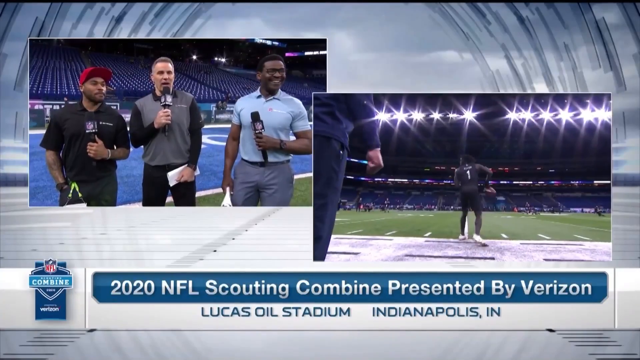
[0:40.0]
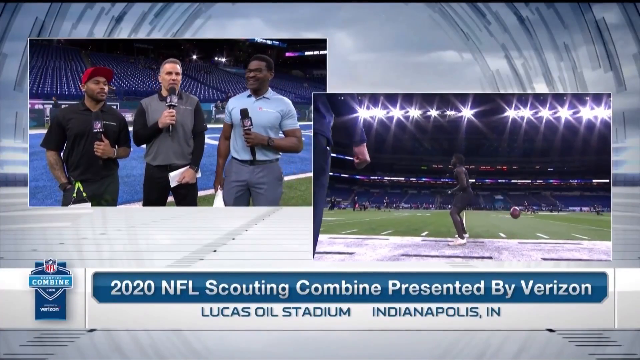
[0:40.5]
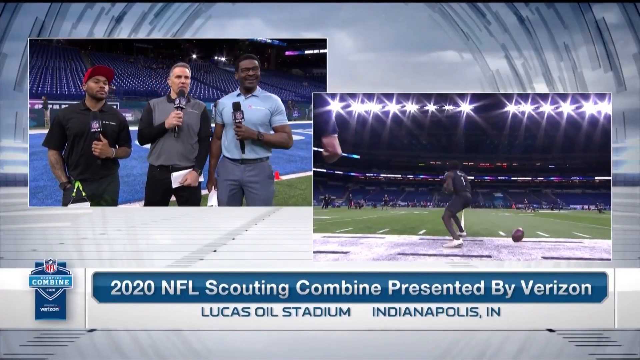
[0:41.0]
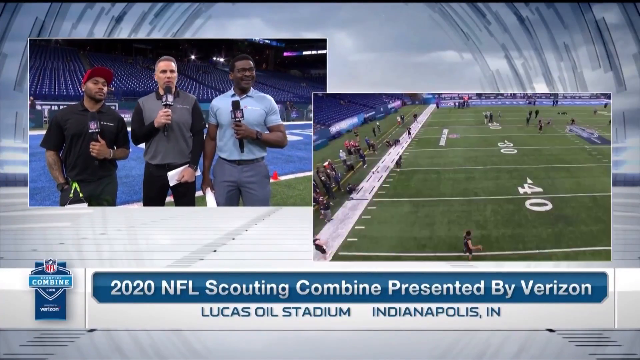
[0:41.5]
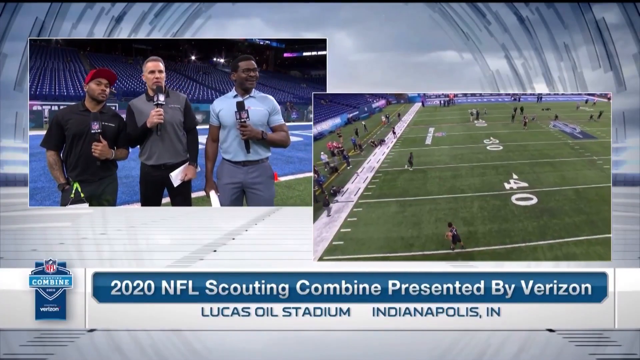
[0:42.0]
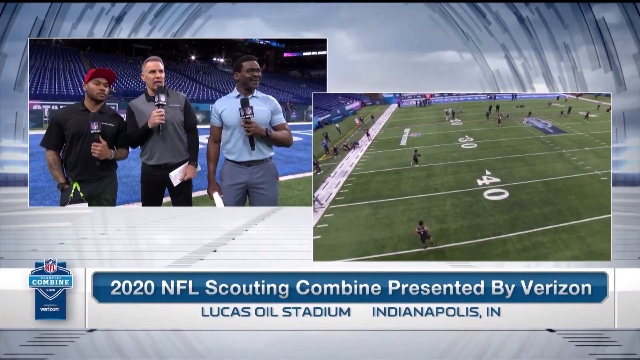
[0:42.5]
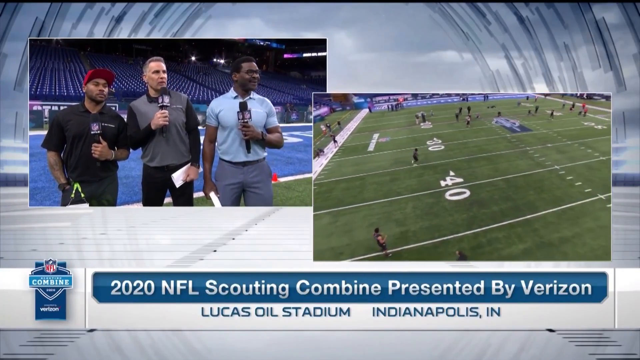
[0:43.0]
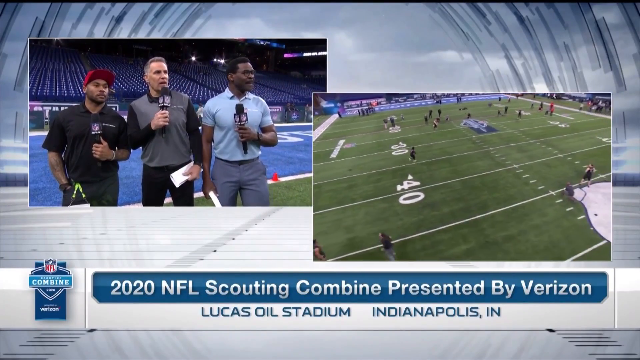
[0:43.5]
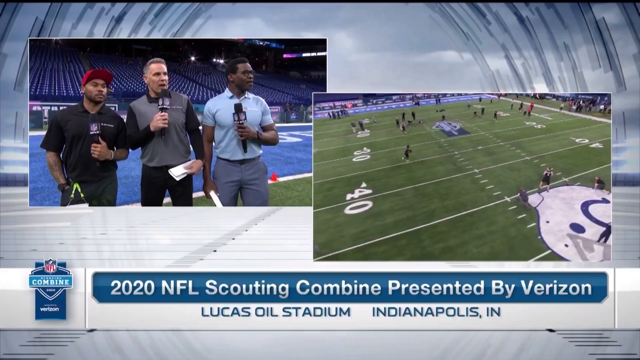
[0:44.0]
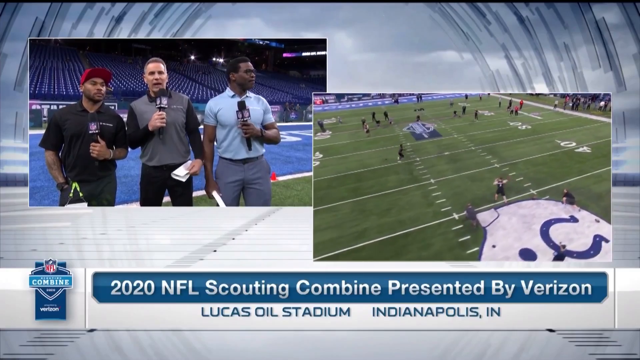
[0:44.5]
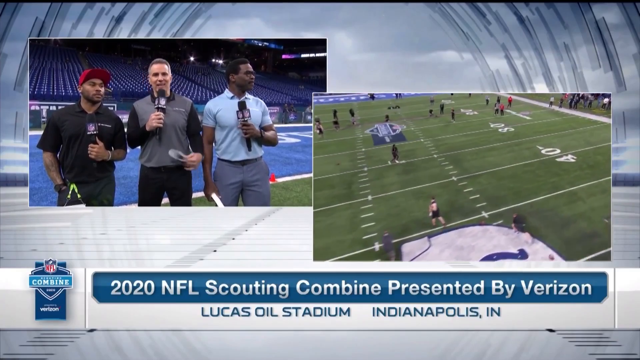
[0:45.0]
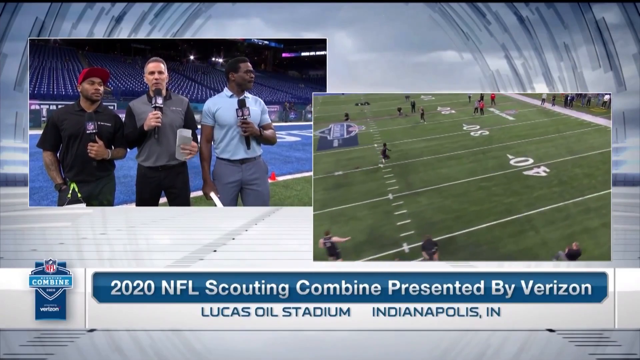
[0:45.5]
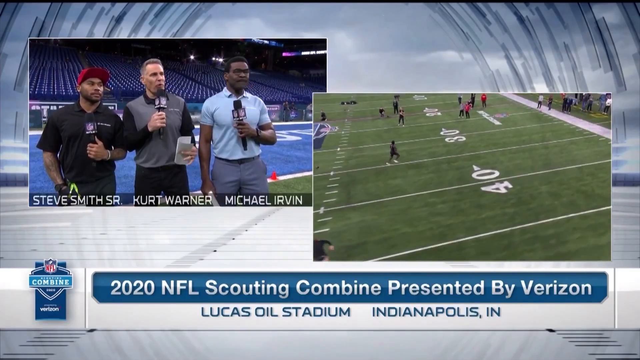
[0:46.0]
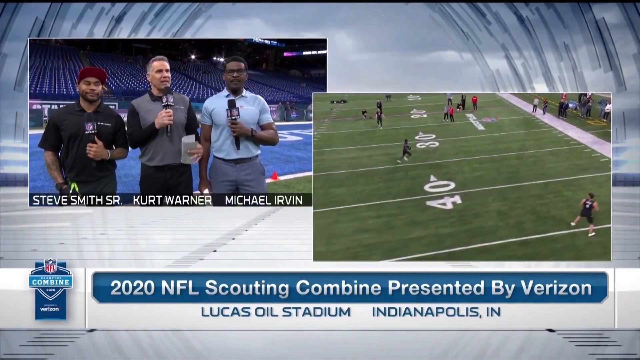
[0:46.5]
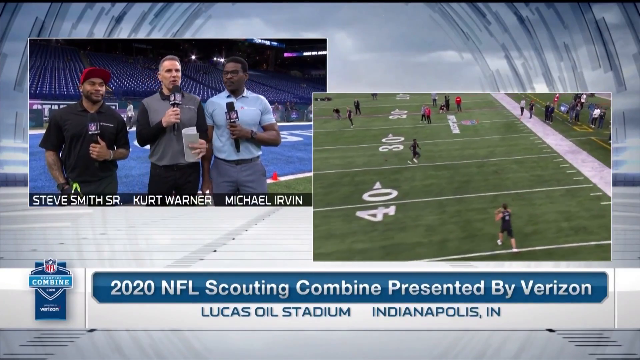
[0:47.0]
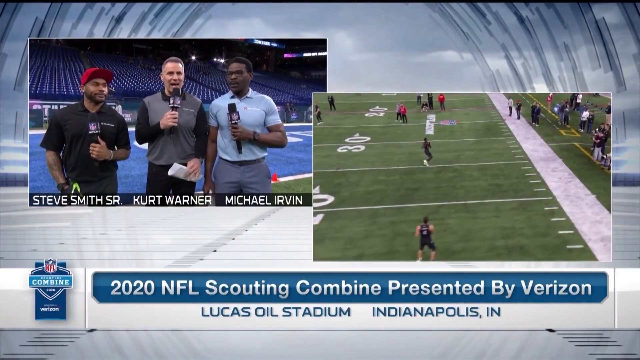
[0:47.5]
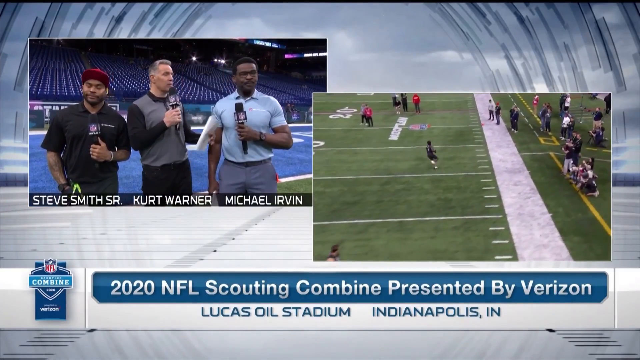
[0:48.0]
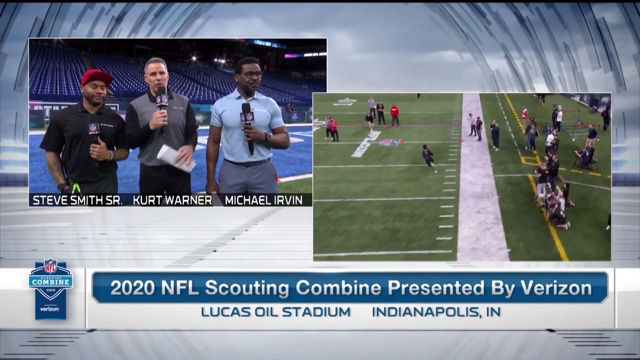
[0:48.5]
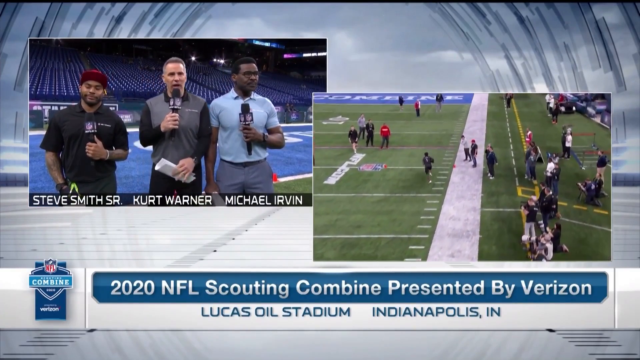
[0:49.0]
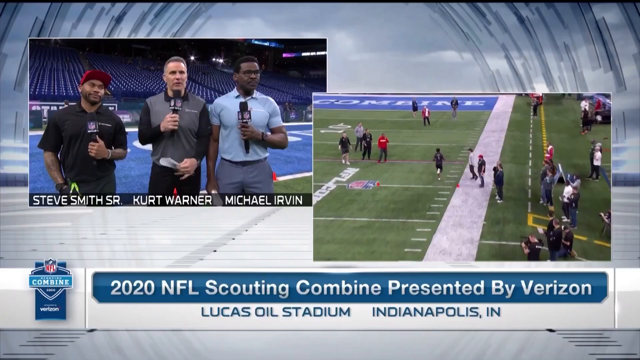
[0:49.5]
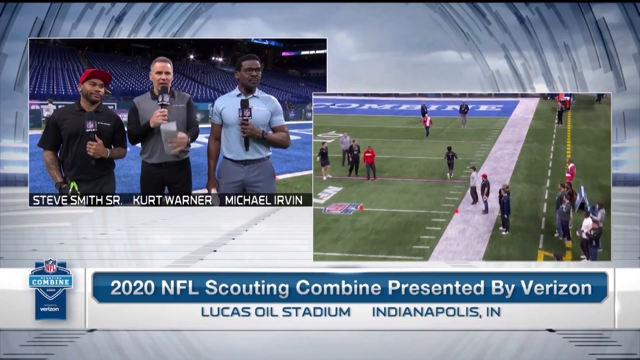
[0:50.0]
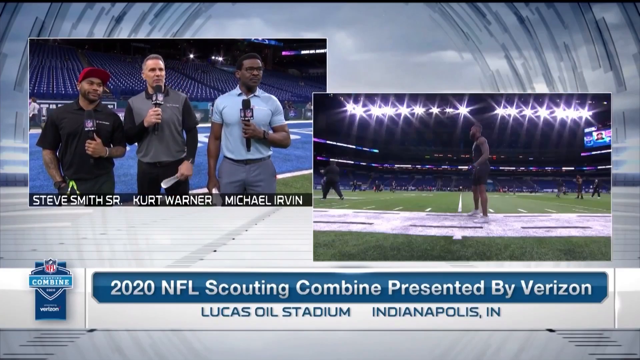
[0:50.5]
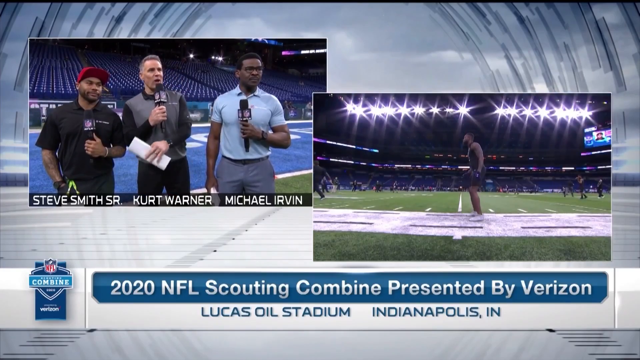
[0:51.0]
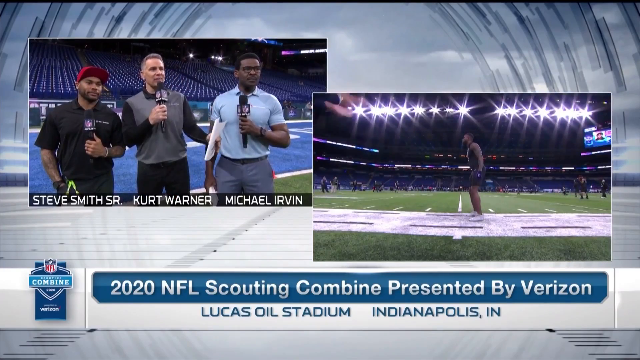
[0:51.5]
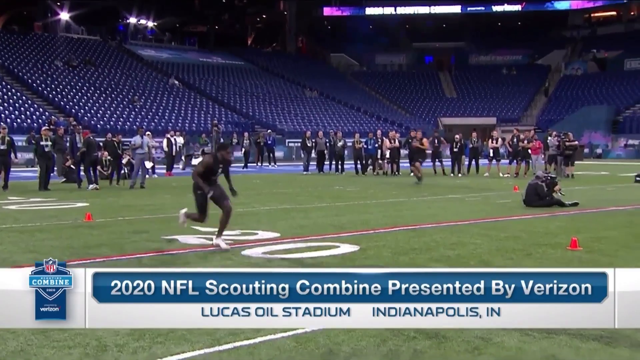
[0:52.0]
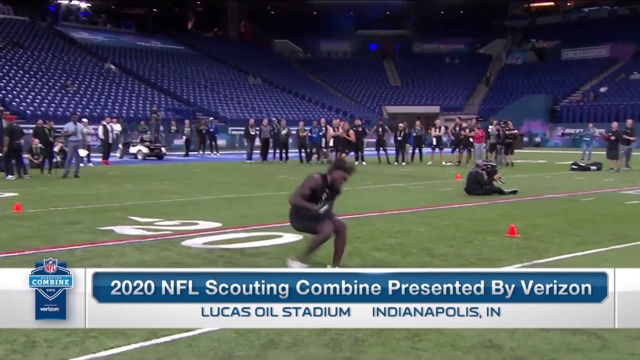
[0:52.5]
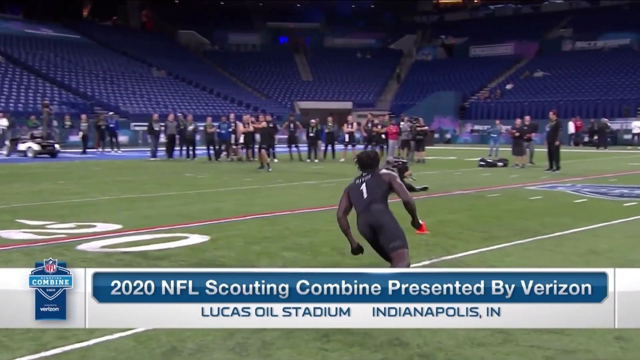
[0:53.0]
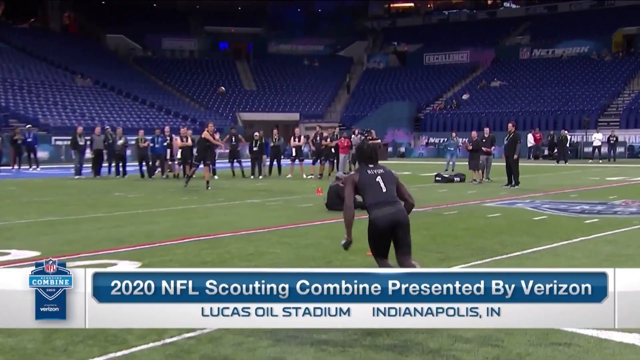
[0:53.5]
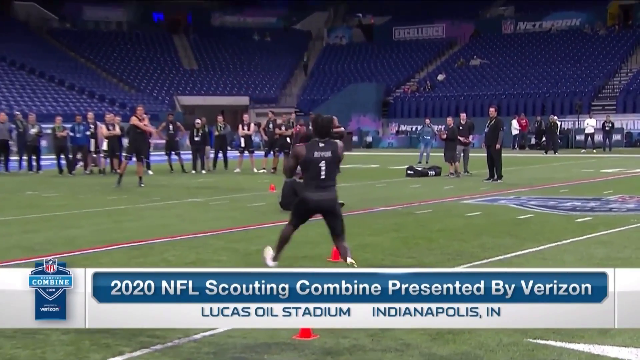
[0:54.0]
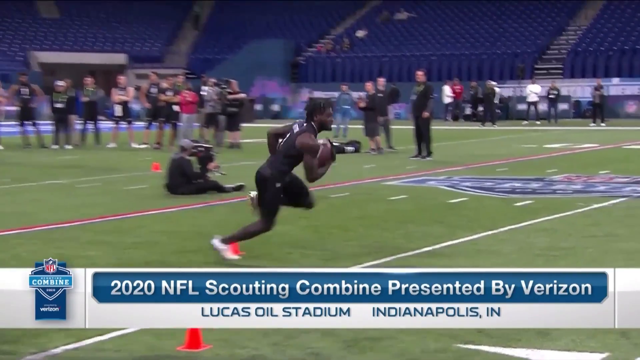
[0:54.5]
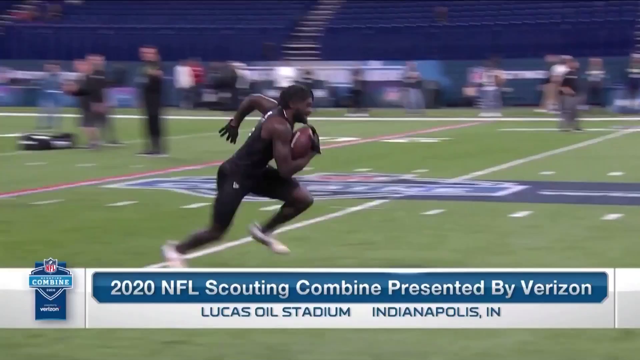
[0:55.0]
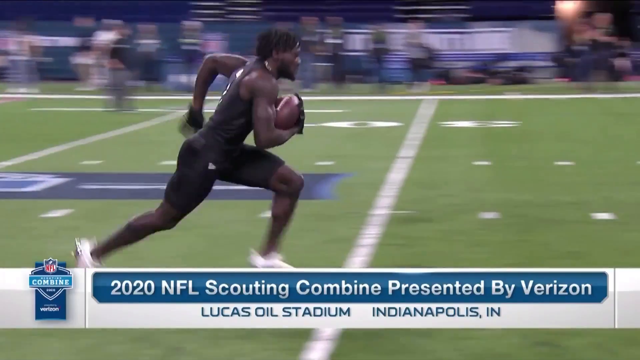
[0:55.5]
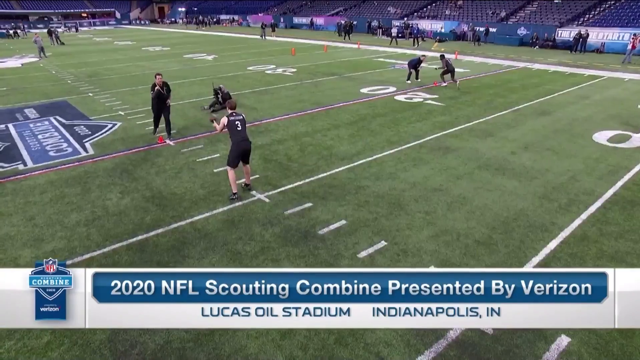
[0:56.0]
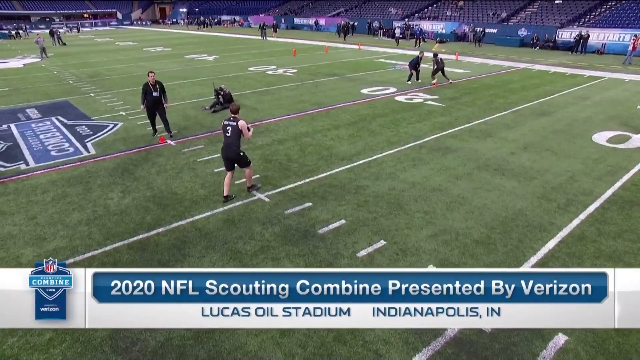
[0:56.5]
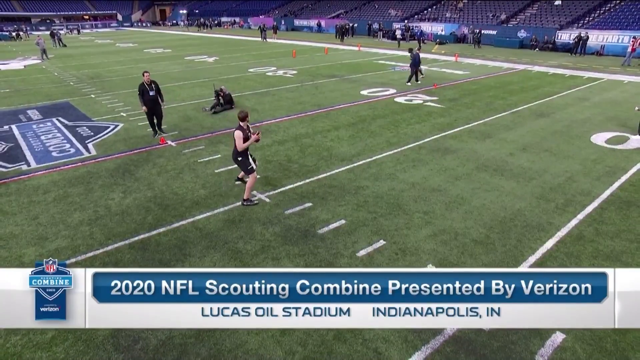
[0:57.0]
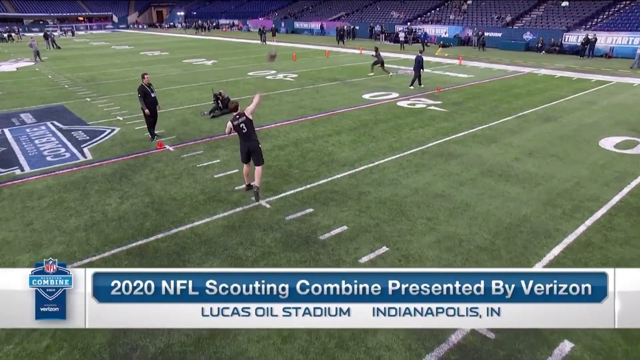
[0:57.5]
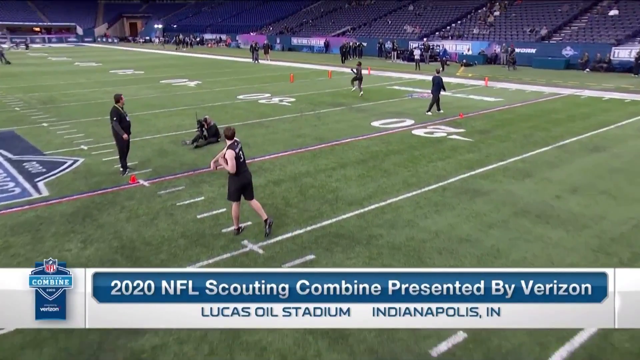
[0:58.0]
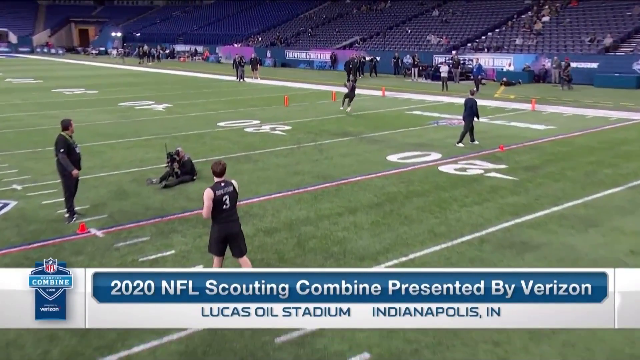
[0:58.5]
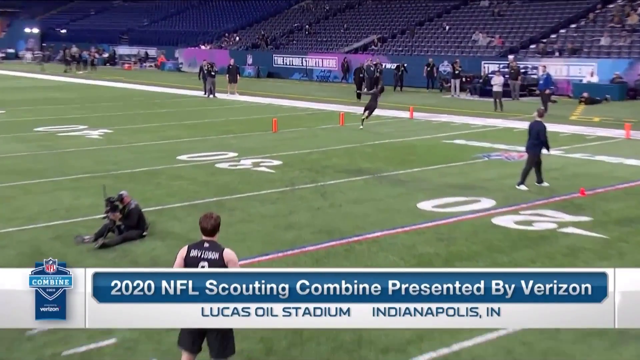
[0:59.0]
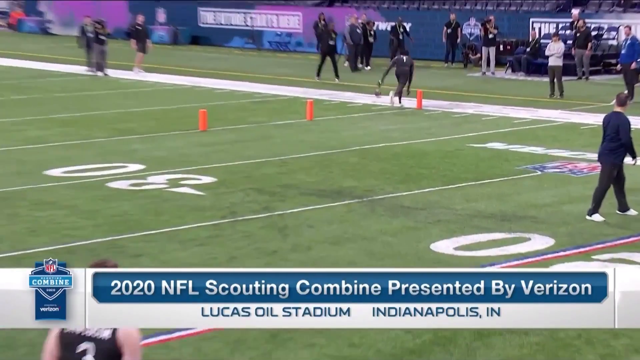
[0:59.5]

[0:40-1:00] Text at the bottom of the screen reads "2020 NFL Scouting Combine presented by Verizon"; the event is at Lucas Loyal Stadium in Indianapolis, Indiana. The NFL Combine logo is in the lower left corner of the screen. In the upper left corner, three men talk; they are news broadcasters doing a news report. On the right side of the screen, a person runs across the football field during the Combine. He runs up the field, quickly stops, turns, catches a football thrown to him, then turns the other direction and sprints up the field. Next, he runs down what is kind of the sideline of the field; a person throws the ball to him, but he does not catch it and the ball lands on the ground.